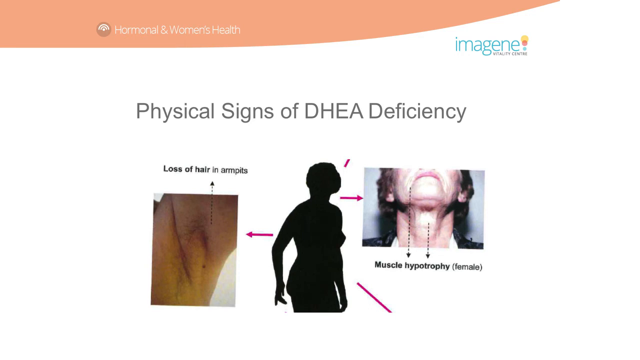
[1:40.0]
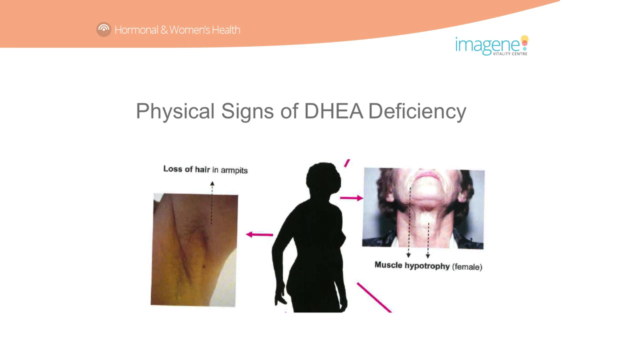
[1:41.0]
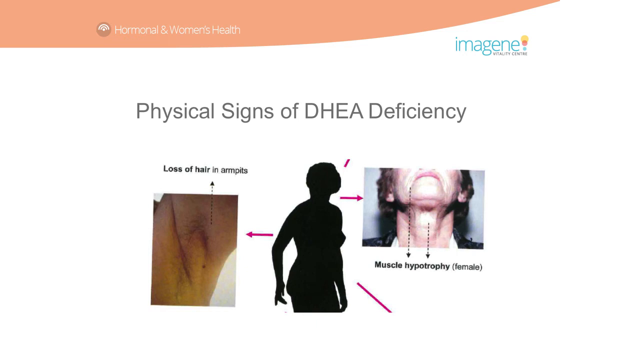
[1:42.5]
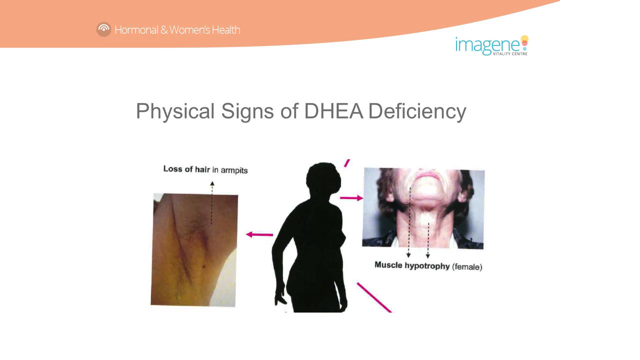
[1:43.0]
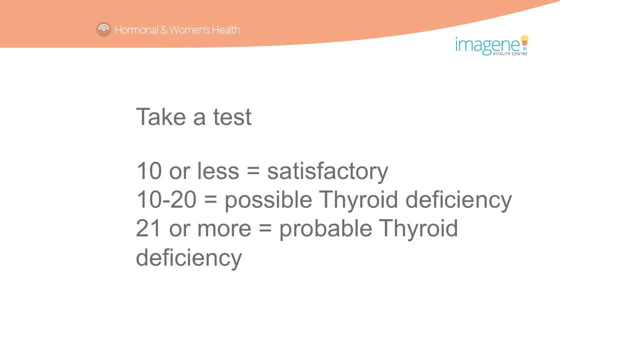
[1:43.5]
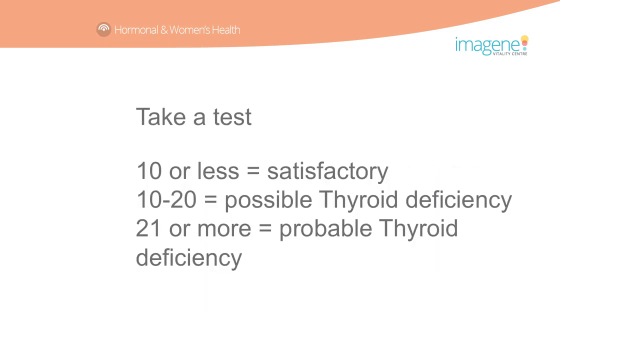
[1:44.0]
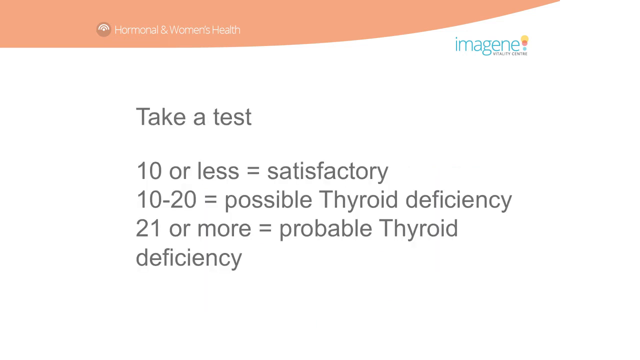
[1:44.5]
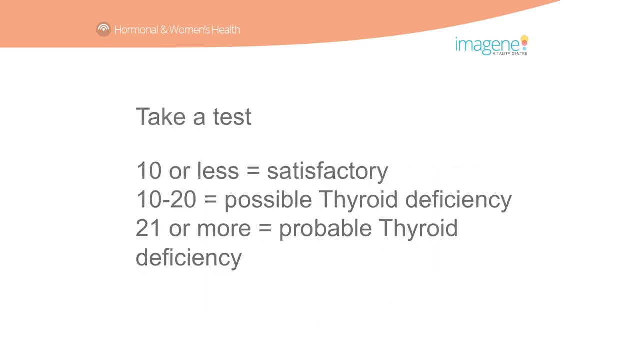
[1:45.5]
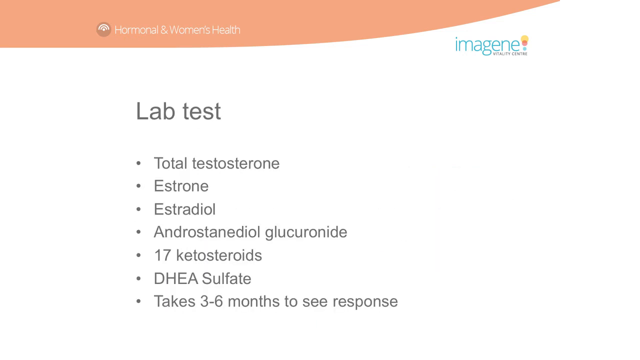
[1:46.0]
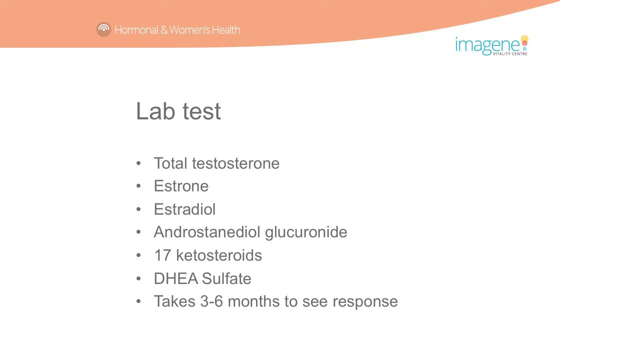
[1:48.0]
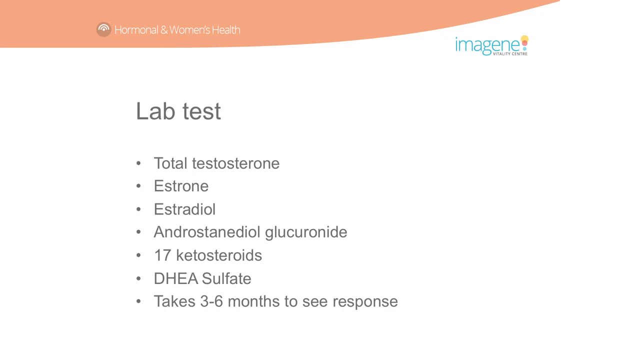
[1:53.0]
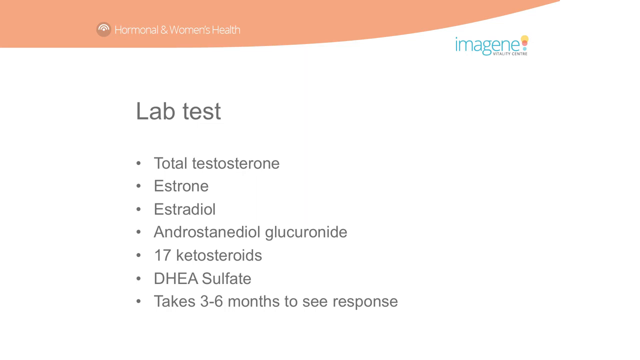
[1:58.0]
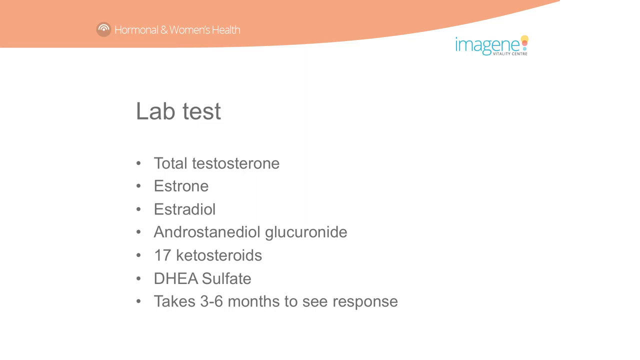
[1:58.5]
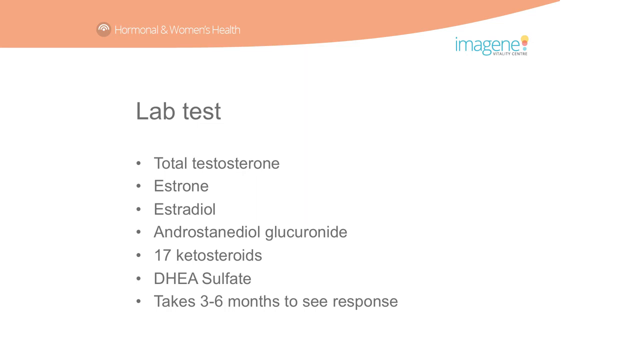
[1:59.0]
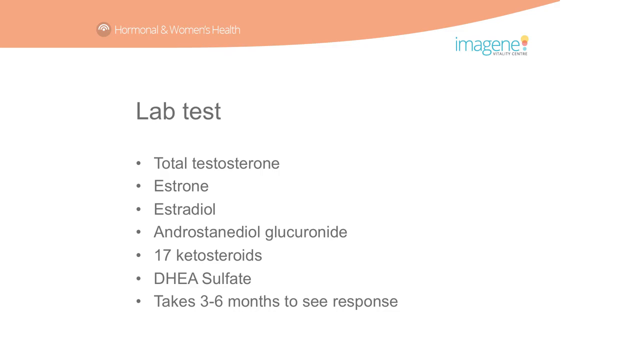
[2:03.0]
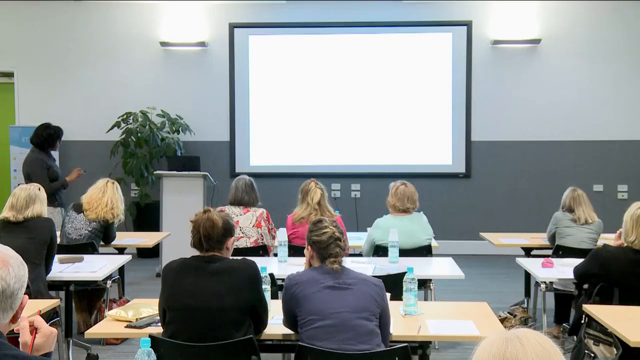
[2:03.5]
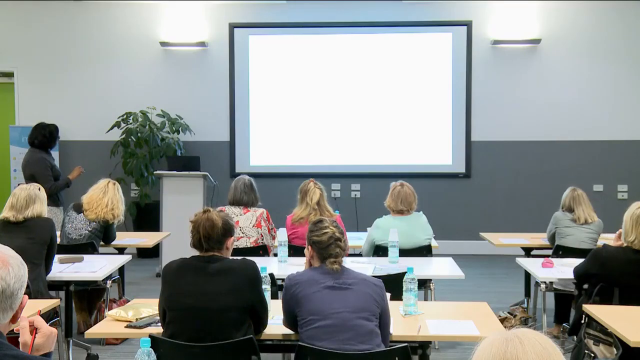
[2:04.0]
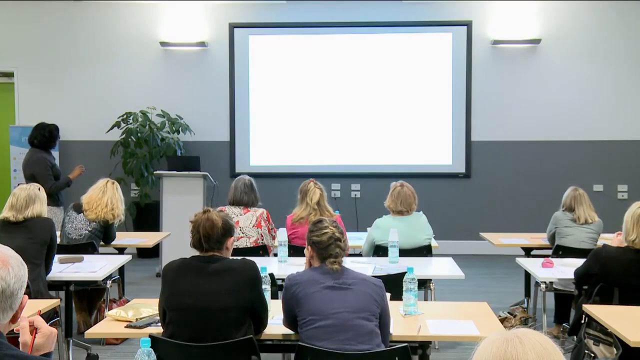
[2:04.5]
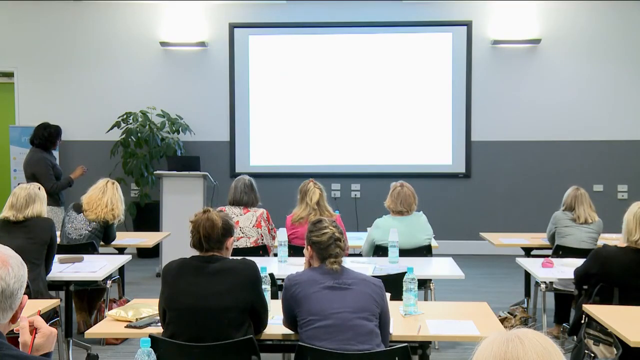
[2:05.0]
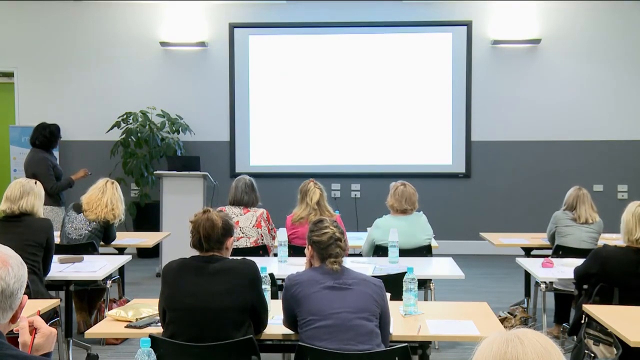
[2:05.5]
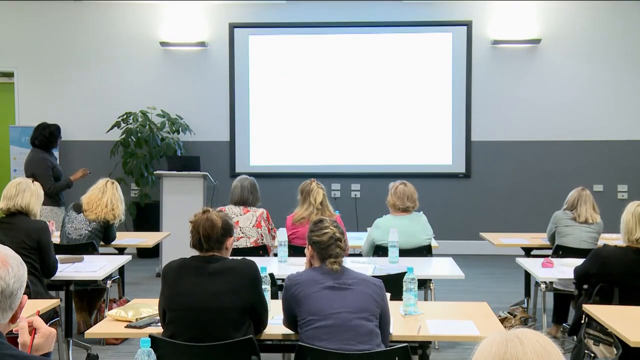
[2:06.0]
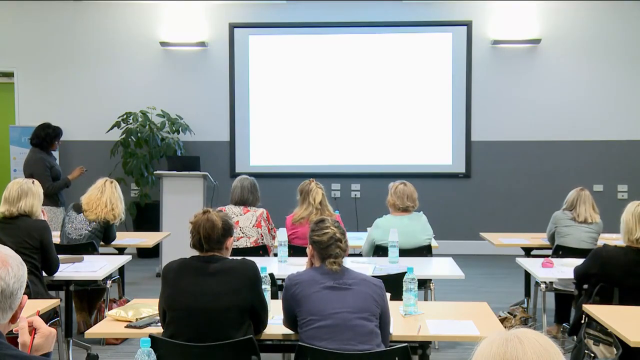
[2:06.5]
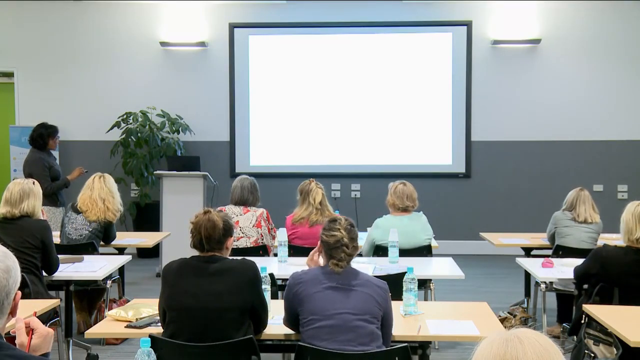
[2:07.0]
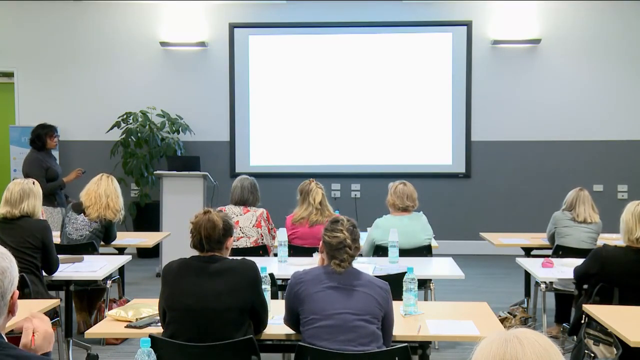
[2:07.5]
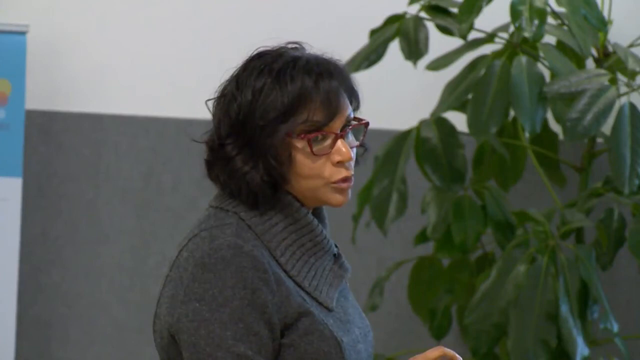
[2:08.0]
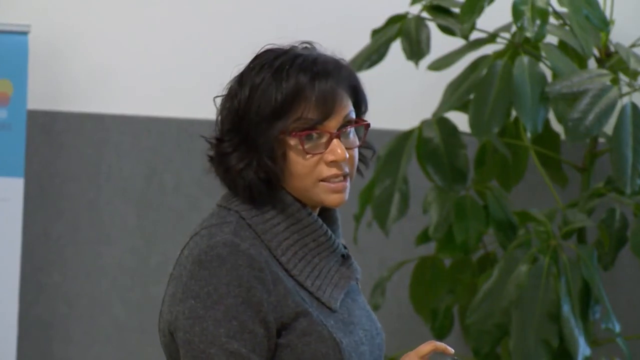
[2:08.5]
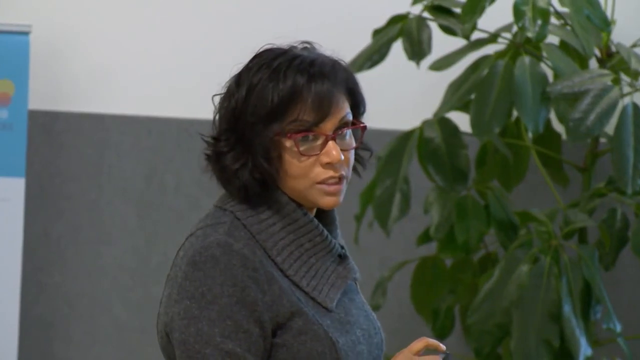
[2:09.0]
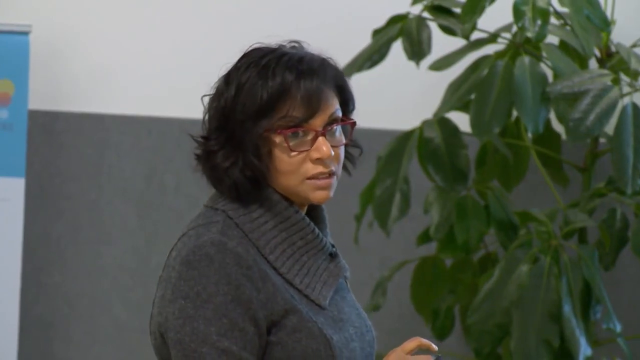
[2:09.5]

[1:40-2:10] The next slide, on a white background, reads "physical signs of DHEA deficiency". Above an image is the text "loss of hair and armpits", and the image shows an armpit with no hair that looks as if it was shaved. Then it reads "muscle hypotrophy", which stays on screen for a few seconds. Next a slide reads "take a test": "10 or less = satisfactory", "10 through 20 = possible thyroid deficiency", "21 or more probable thyroid deficiency". Then "lab test" lists testosterone, estrone, estradiol, 7-ketos steroids, DHEA sulfate, and "takes three to six months to see response".